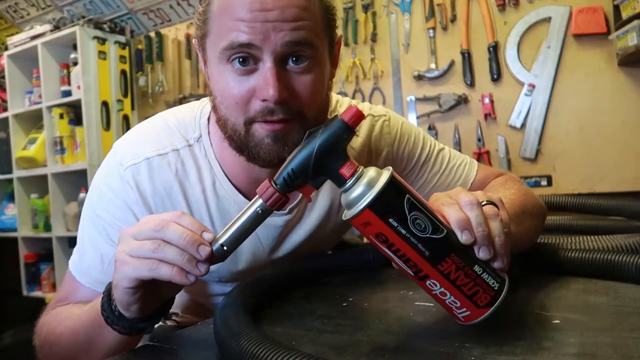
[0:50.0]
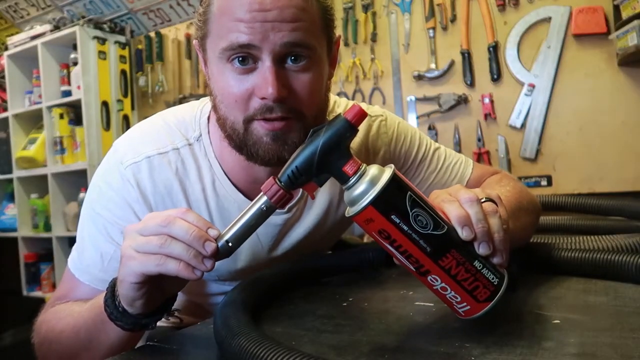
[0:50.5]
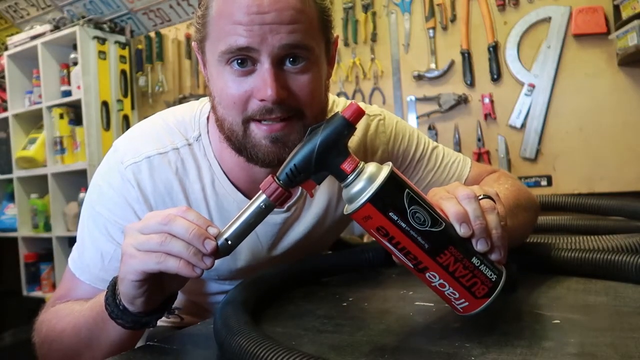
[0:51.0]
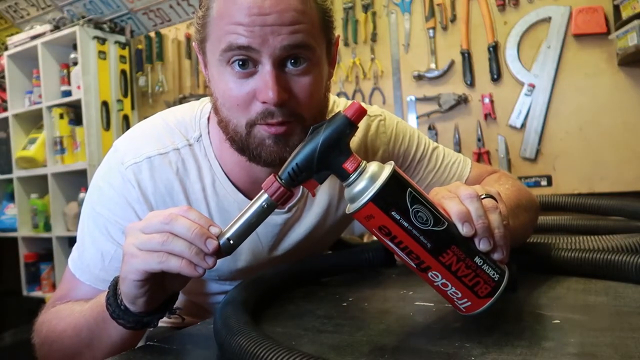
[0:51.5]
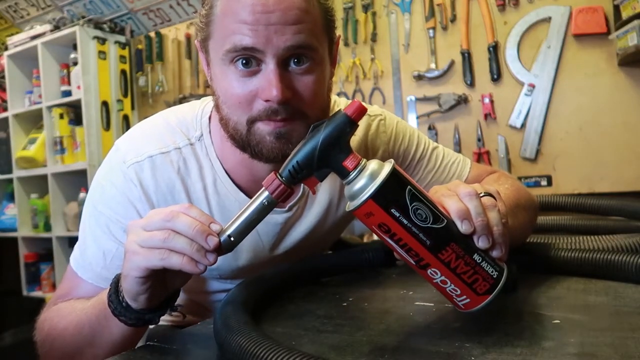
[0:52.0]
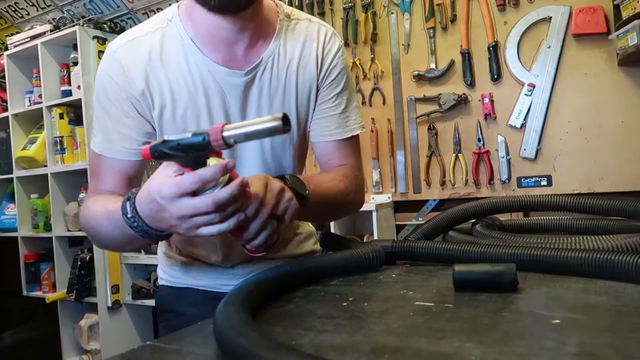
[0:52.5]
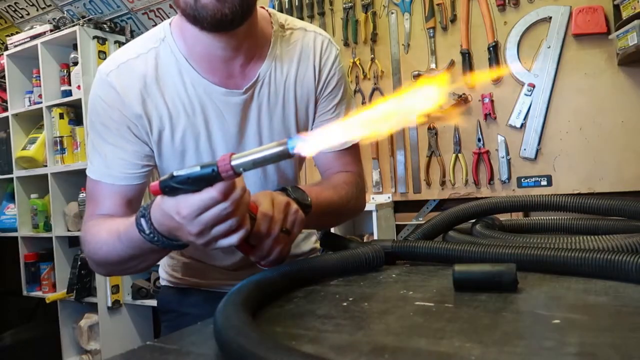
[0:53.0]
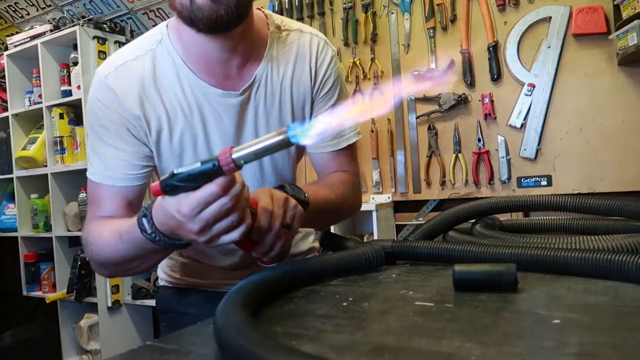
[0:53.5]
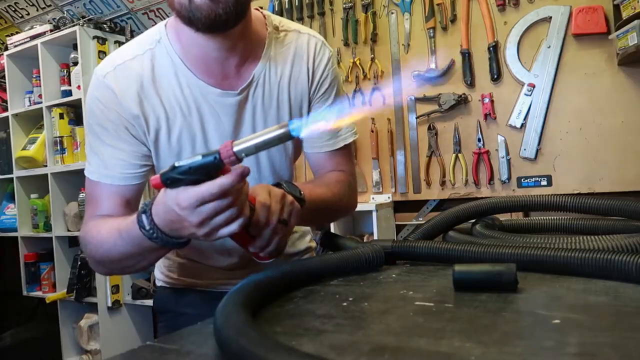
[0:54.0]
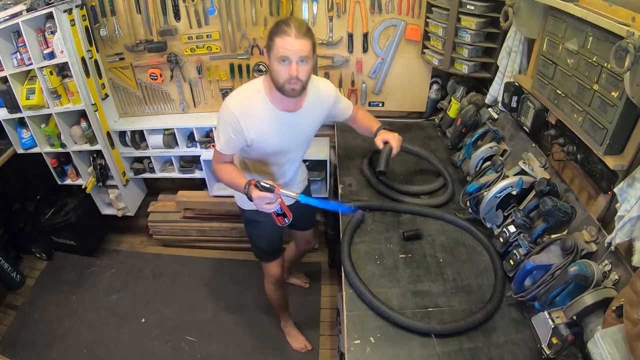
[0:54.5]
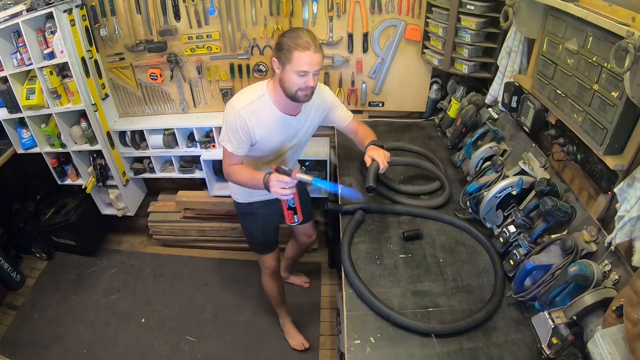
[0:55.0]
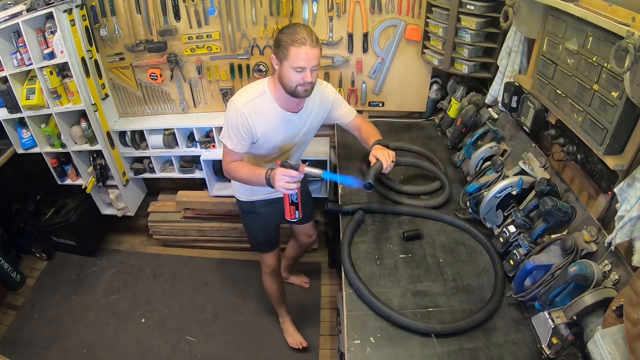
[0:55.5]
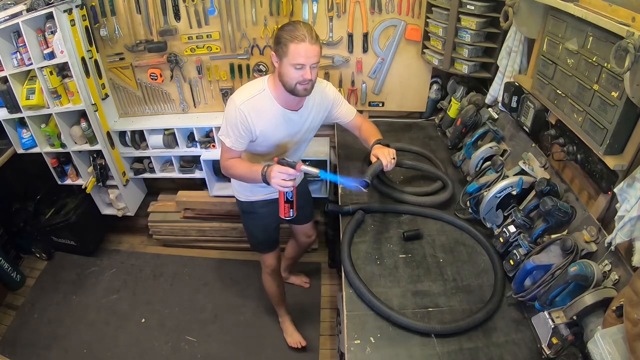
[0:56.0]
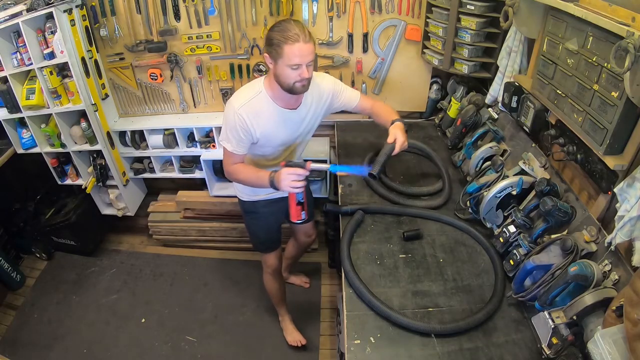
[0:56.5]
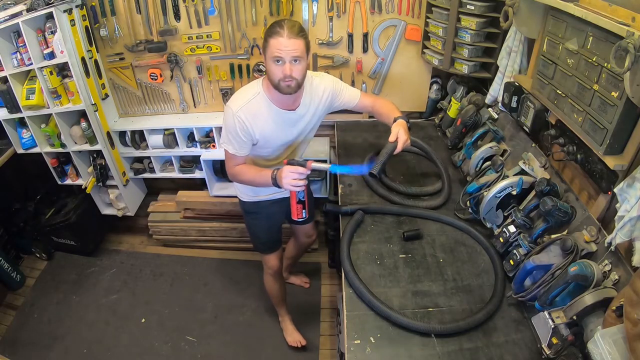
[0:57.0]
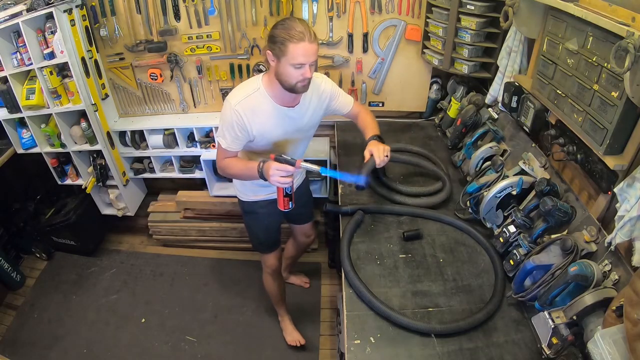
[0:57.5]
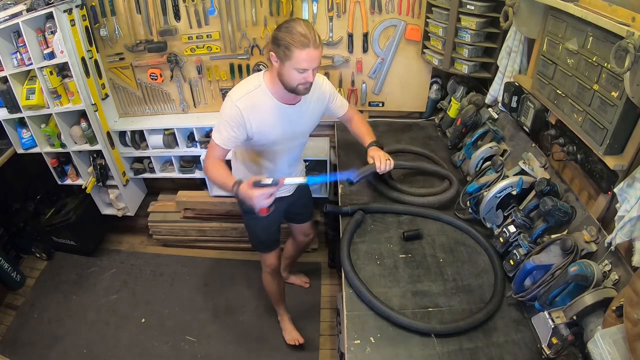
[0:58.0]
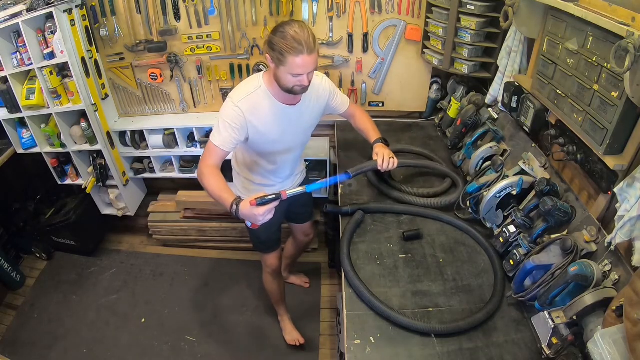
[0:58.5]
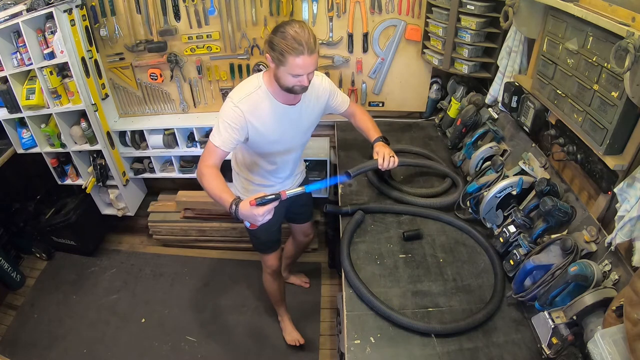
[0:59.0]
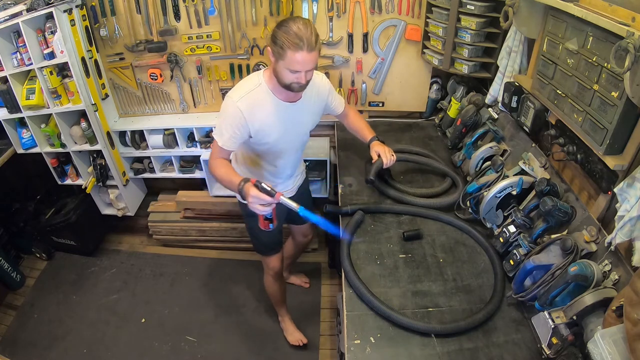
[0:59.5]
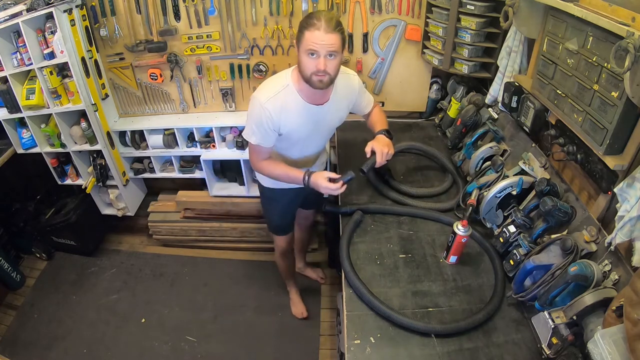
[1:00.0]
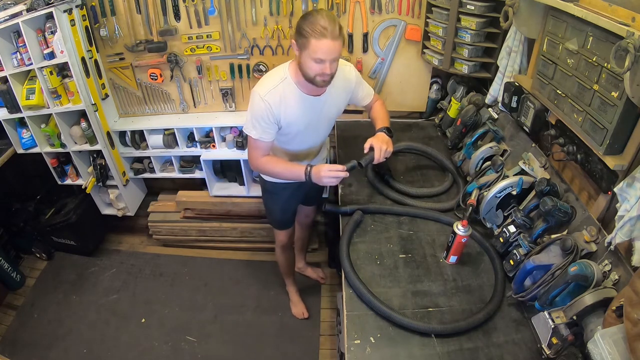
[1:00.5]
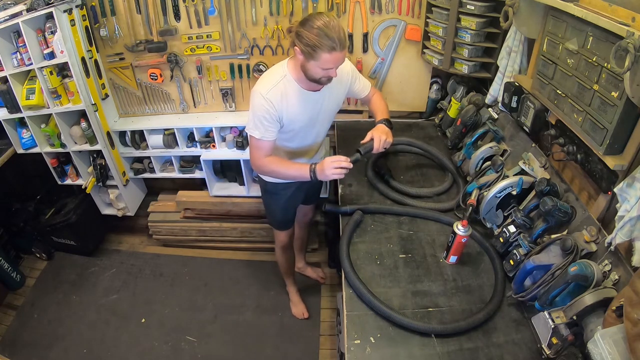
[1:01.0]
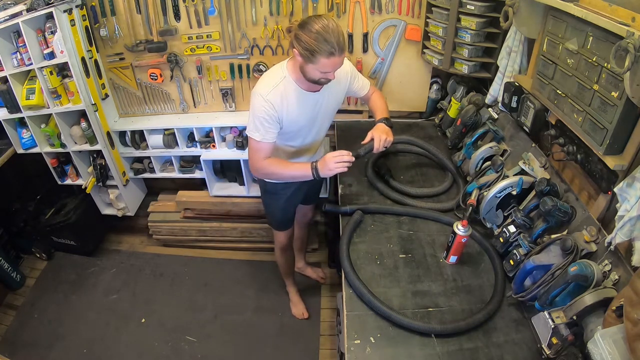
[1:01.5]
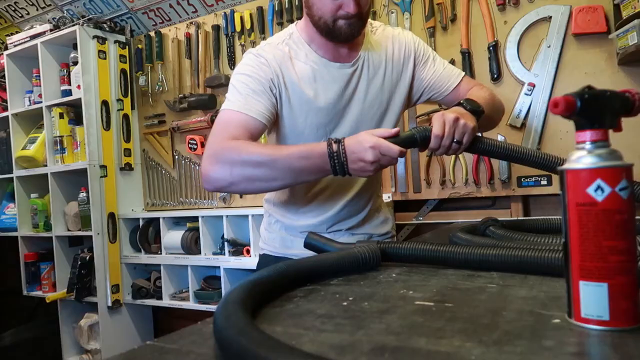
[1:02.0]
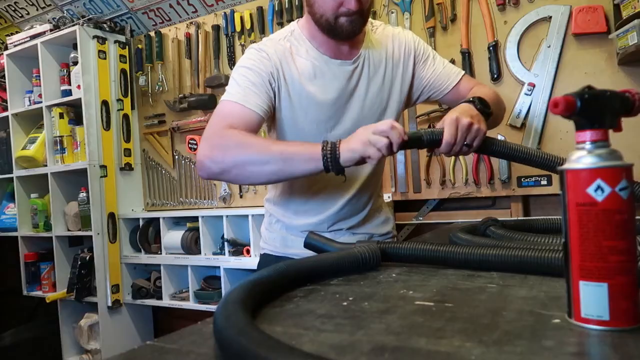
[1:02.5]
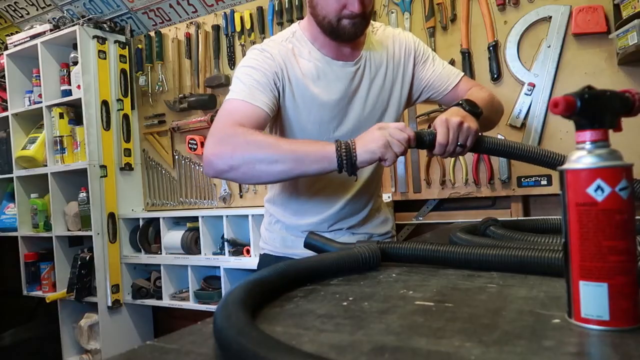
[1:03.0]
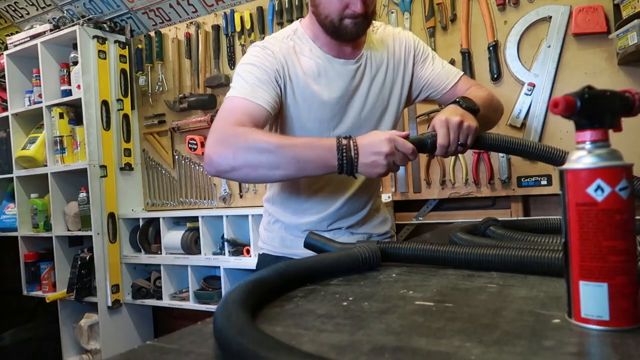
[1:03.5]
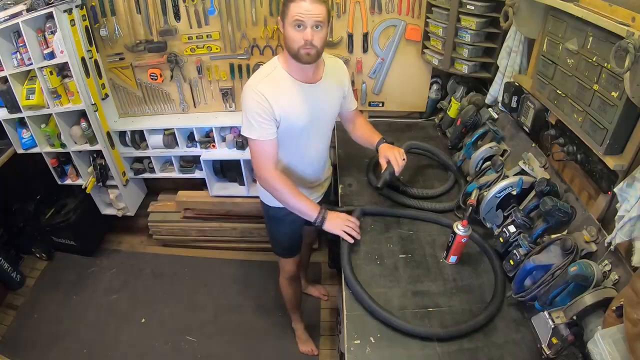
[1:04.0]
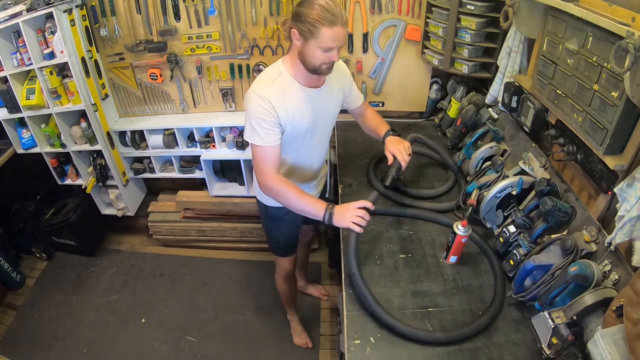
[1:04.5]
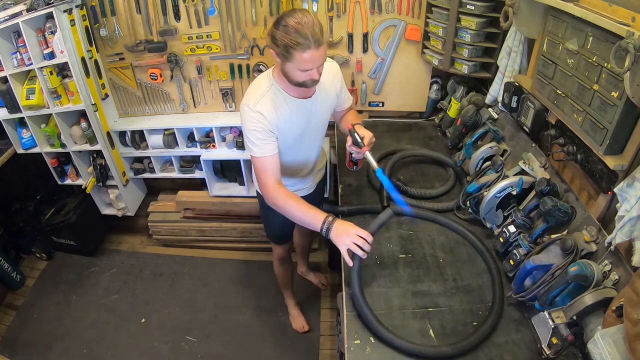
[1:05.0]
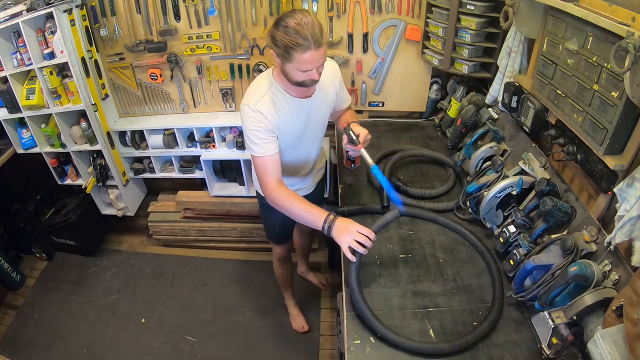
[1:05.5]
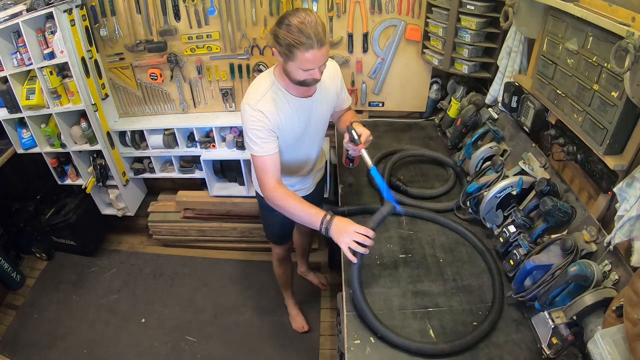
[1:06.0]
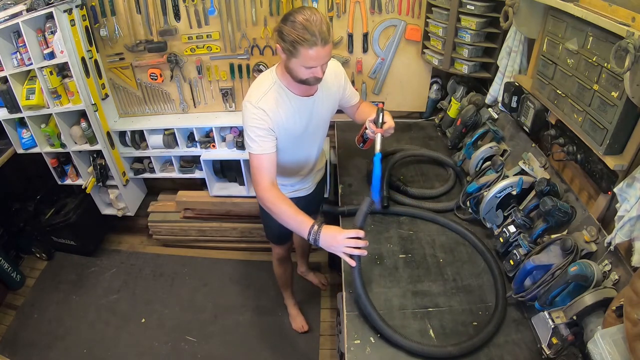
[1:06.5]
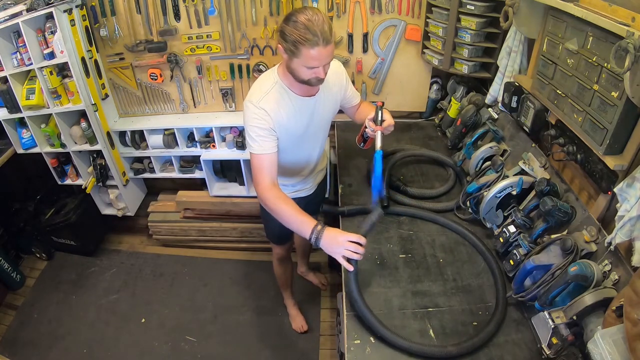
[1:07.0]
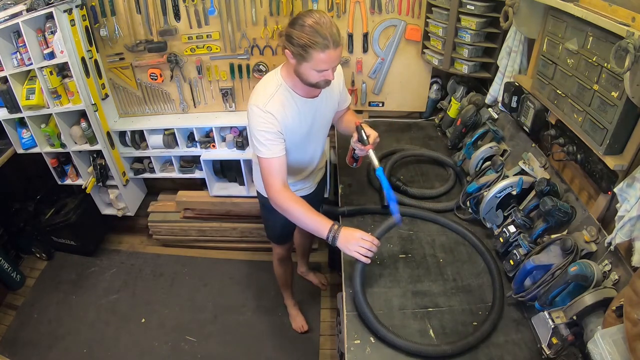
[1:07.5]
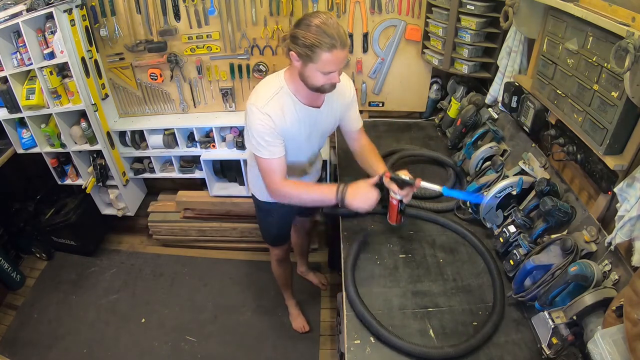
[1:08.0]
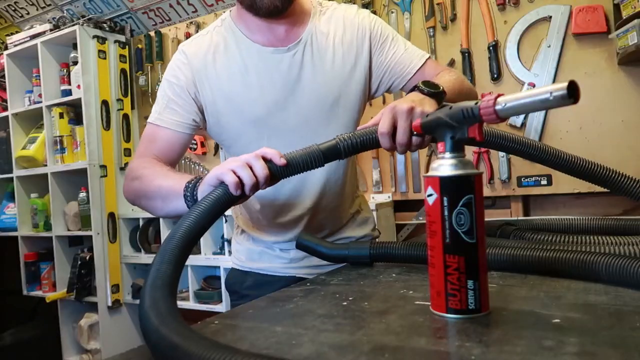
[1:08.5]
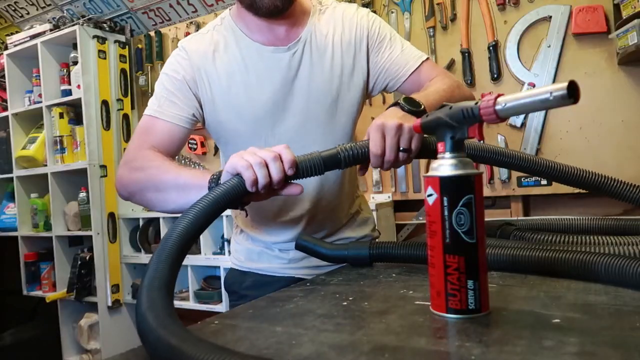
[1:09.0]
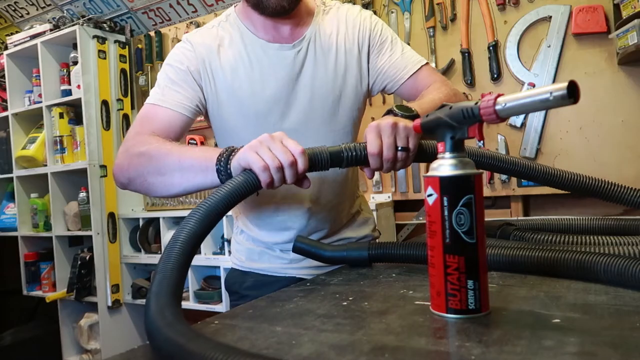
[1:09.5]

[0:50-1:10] The man places the butane blowtorch in front of the camera and talks about it, then presses a red part and a flame comes out. He heats the outside of the other end of the left-side hose, then the middle or opening, and puts the fitting in, apparently to make sure it fits properly. He does the same to one of the openings of the right-side hose, heating the outer and inner parts of the tube, and then fits the right-hand hose into the left-hand hose, the one that already has the fitting.